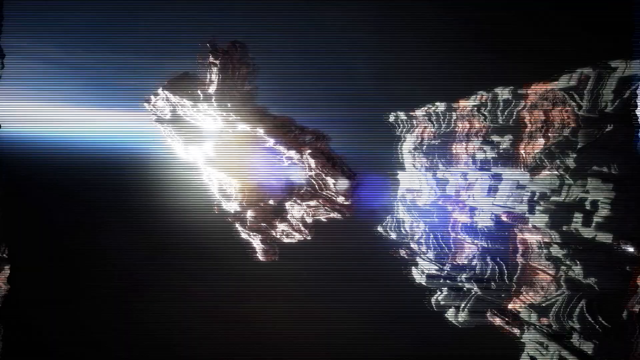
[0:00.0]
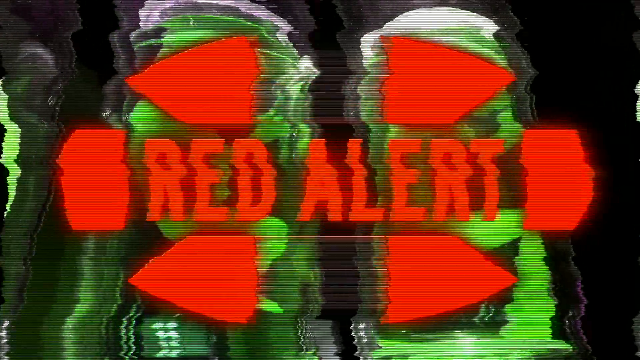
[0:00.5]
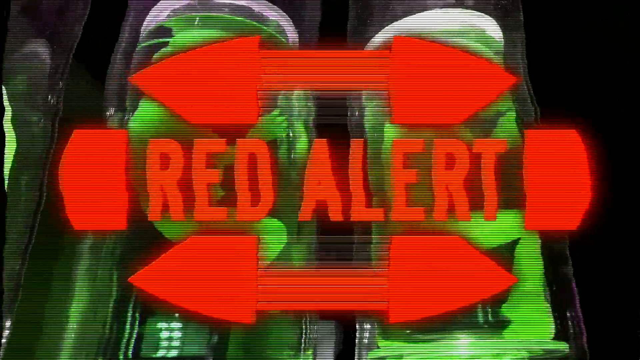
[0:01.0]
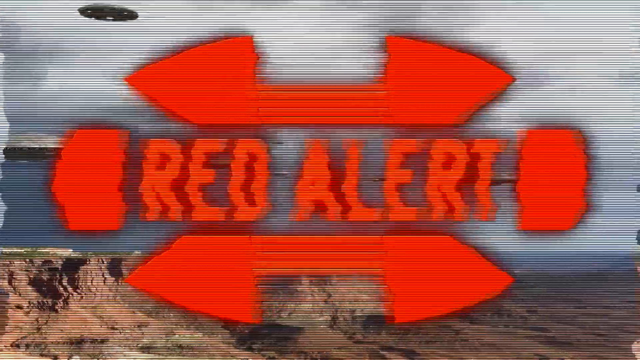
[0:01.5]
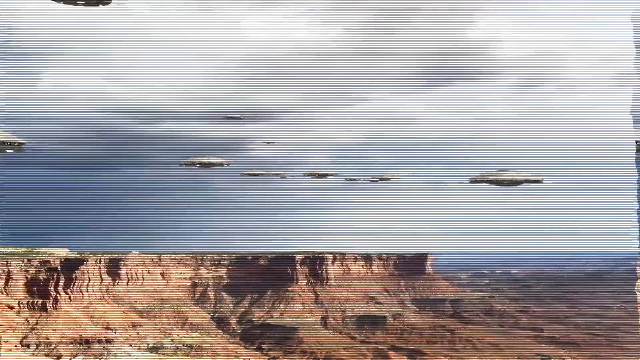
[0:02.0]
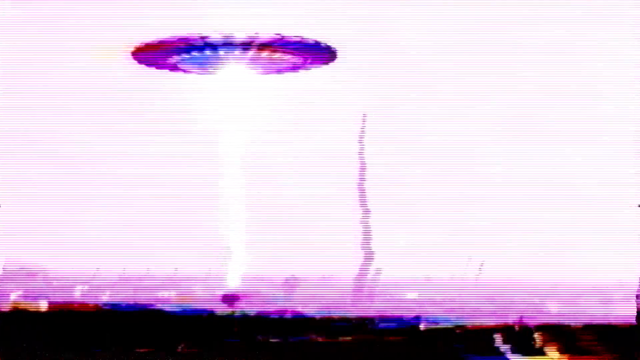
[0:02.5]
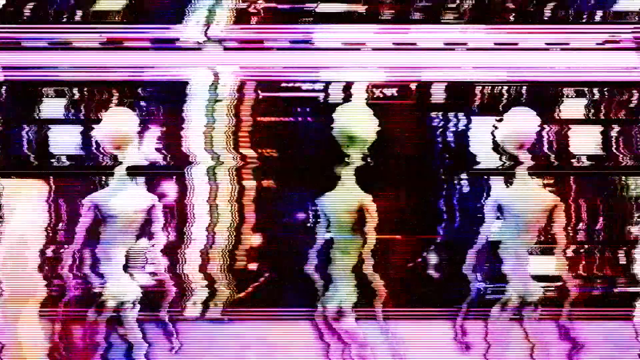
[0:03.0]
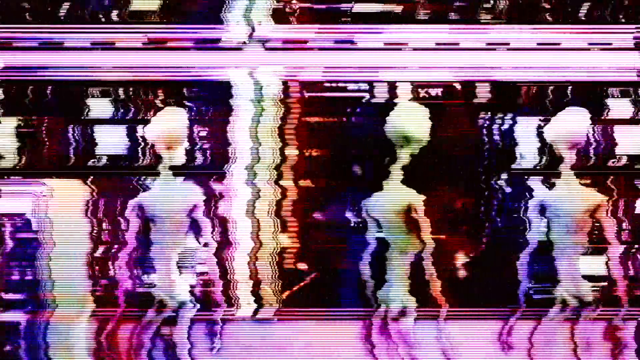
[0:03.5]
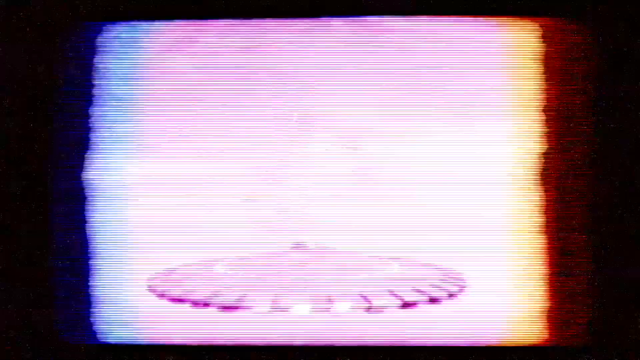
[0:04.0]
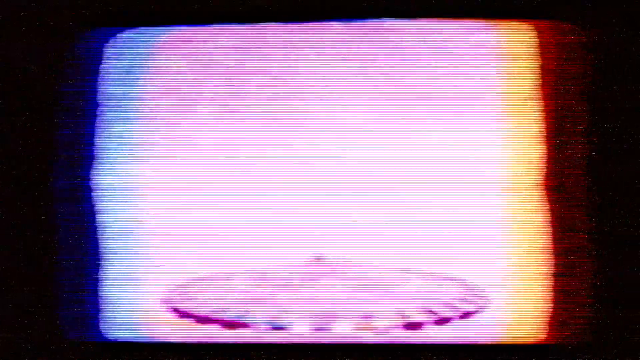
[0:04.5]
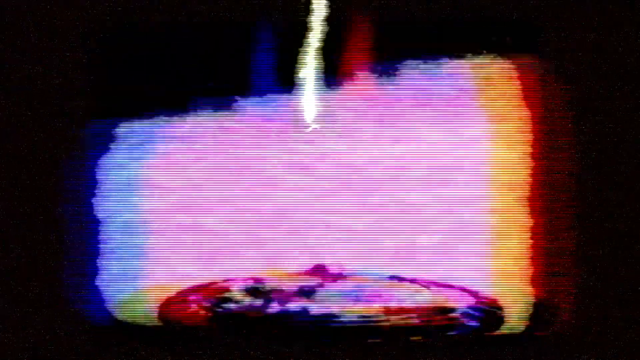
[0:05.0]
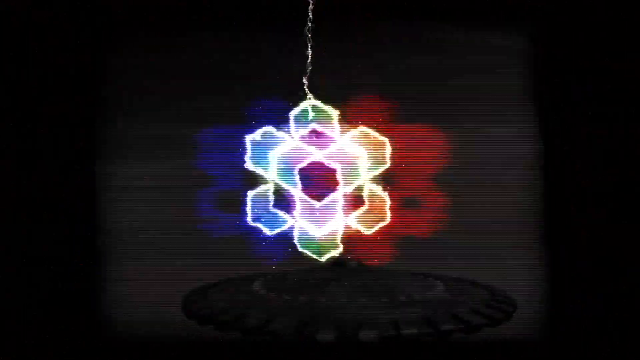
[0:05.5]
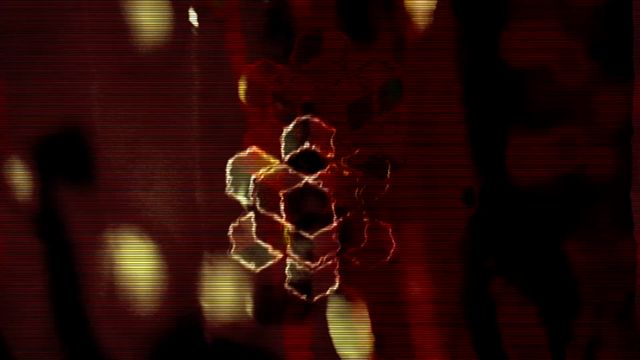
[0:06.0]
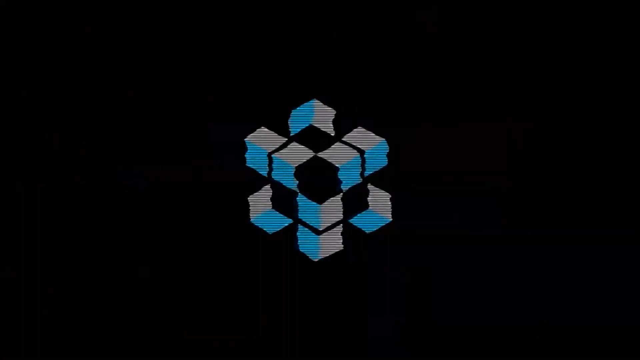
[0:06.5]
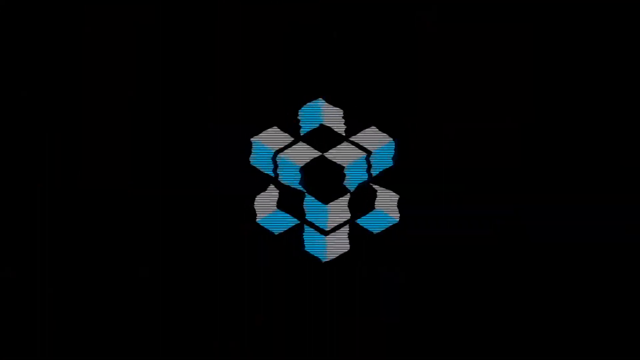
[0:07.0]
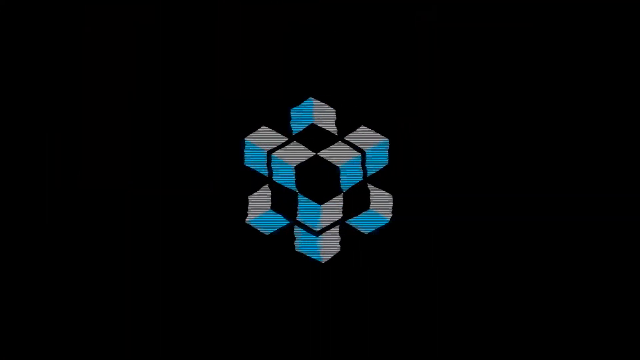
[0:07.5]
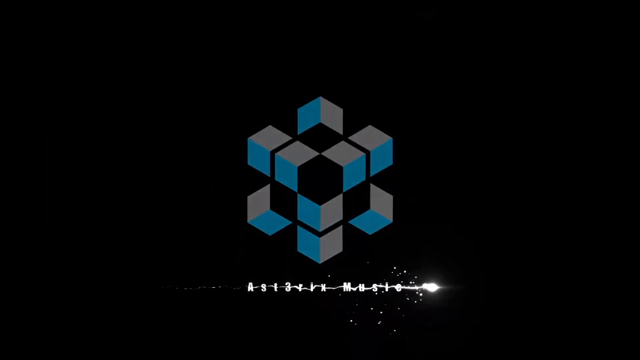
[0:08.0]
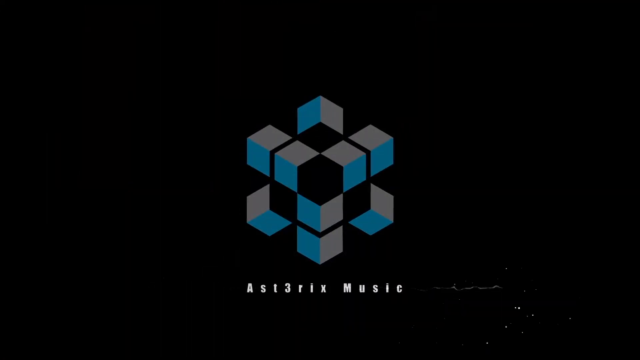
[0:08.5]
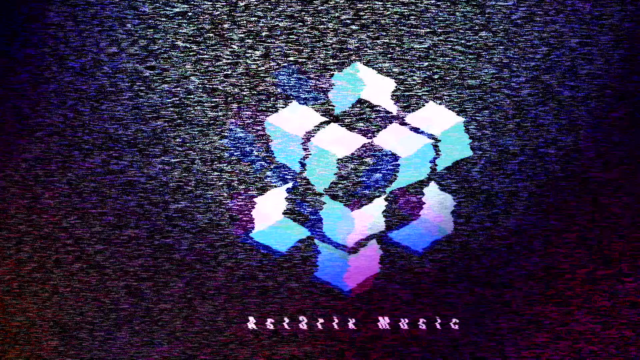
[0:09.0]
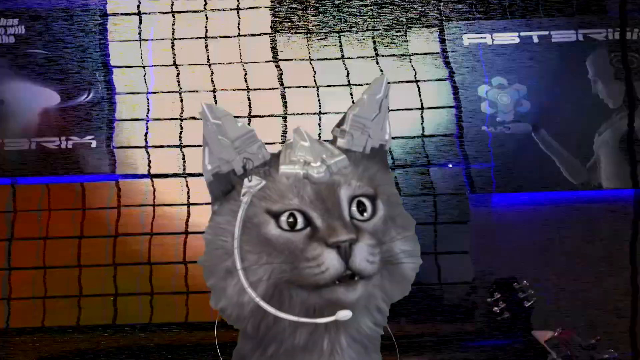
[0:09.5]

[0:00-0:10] The words "red alert", colored red, appear on the screen over a staticky effect. In the green background there appear to be some kind of chambers filled with liquid, or possibly cryopods. The text disappears, and a flock of UFOs flies toward the screen through a mountainous valley. The video then cuts quickly to a single UFO, to some aliens, to a UFO landing, and then to a logo with a lightning strike, all moving very fast. The logo stabilizes, and the words "asterisk music" appear underneath it, with the E in "asterisk" written as a three. The logo then disappears.